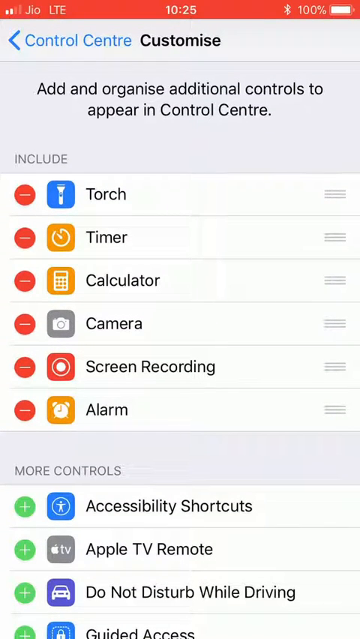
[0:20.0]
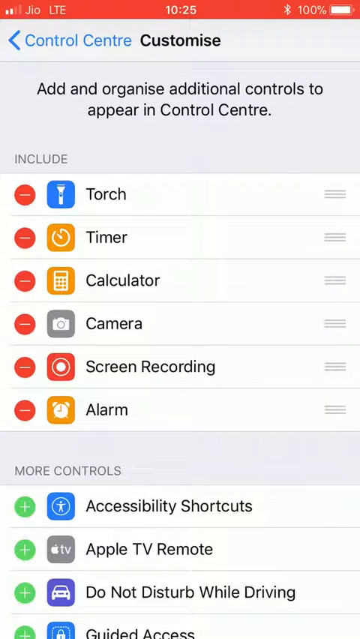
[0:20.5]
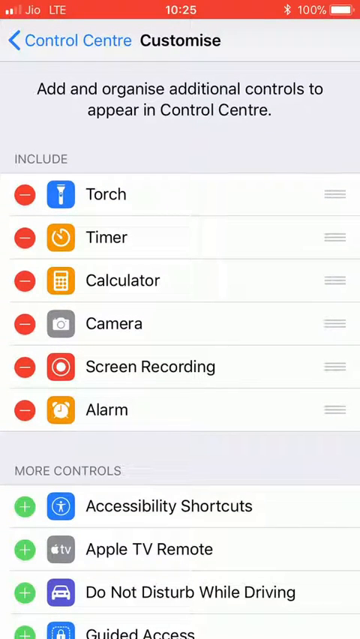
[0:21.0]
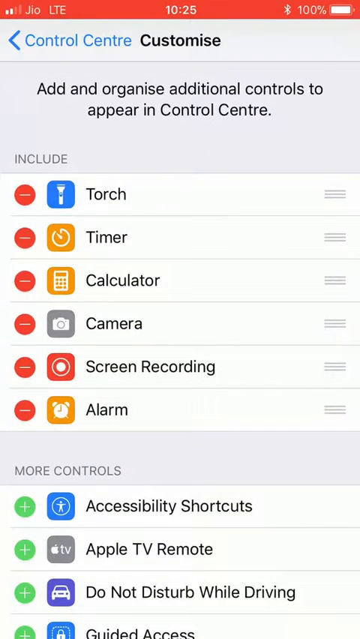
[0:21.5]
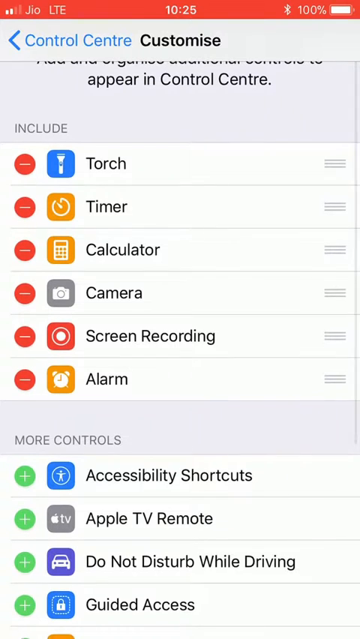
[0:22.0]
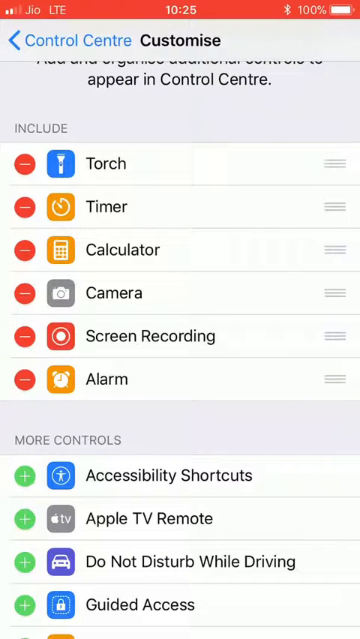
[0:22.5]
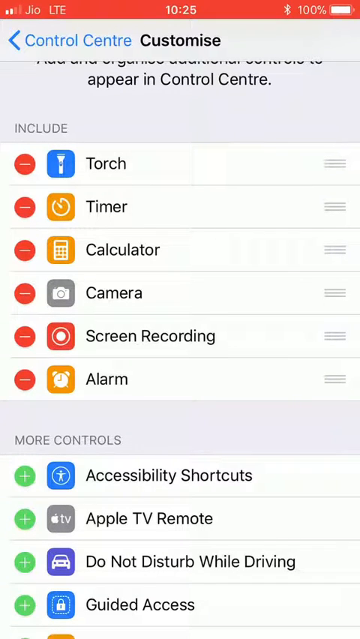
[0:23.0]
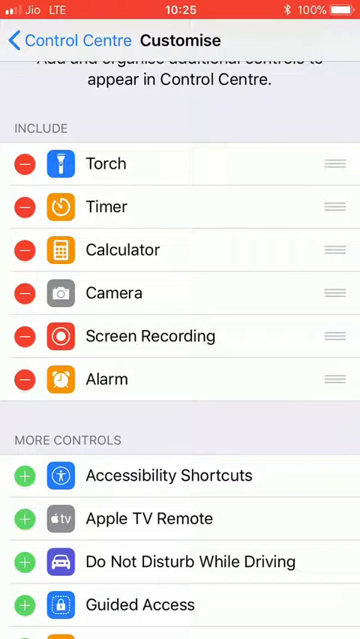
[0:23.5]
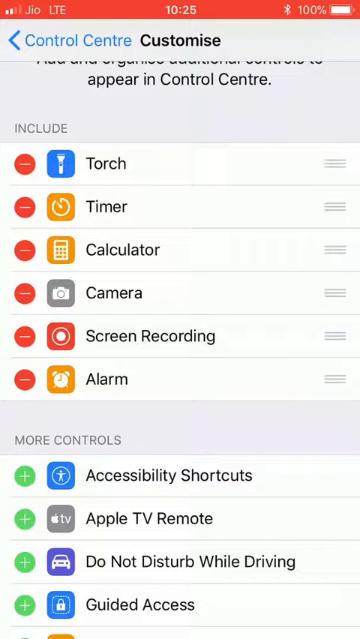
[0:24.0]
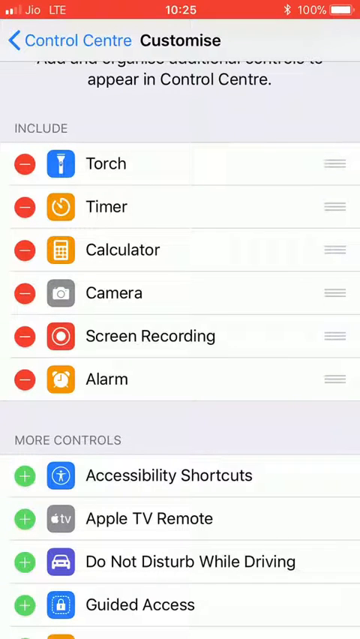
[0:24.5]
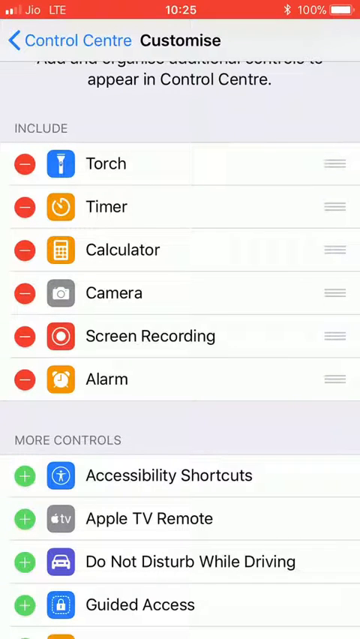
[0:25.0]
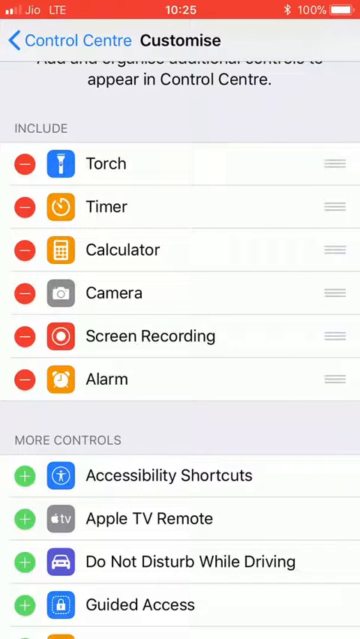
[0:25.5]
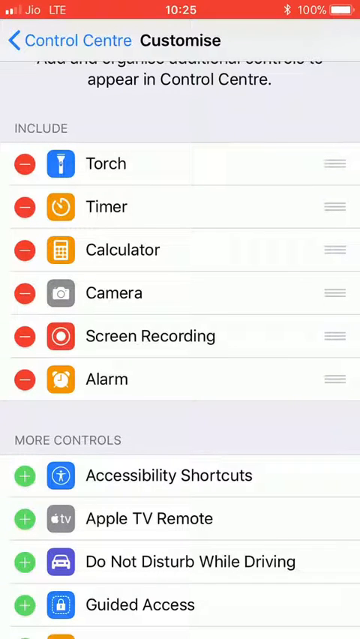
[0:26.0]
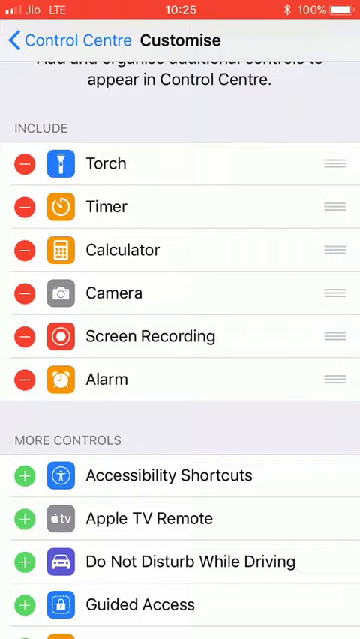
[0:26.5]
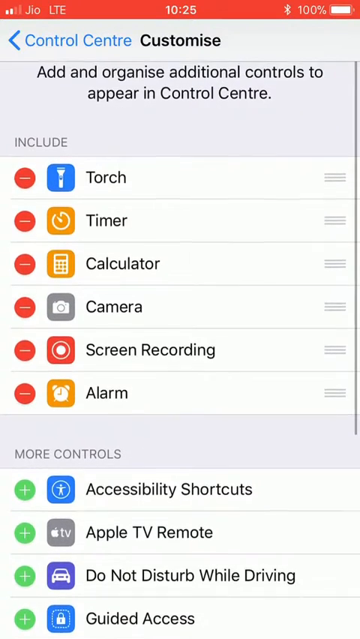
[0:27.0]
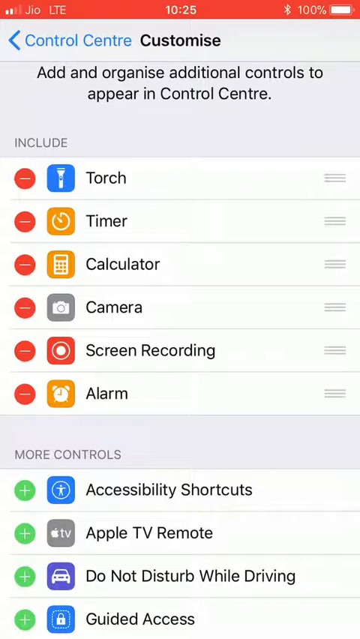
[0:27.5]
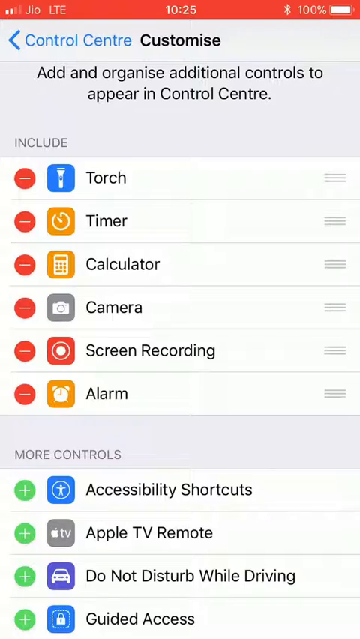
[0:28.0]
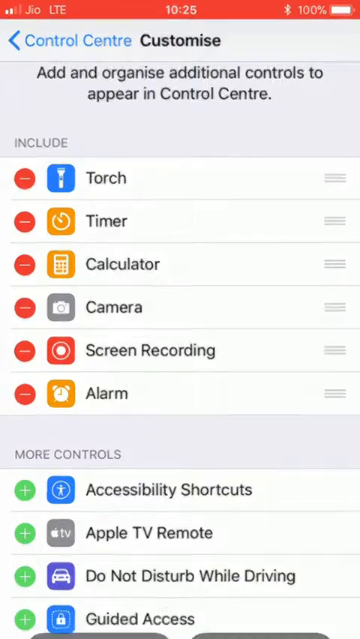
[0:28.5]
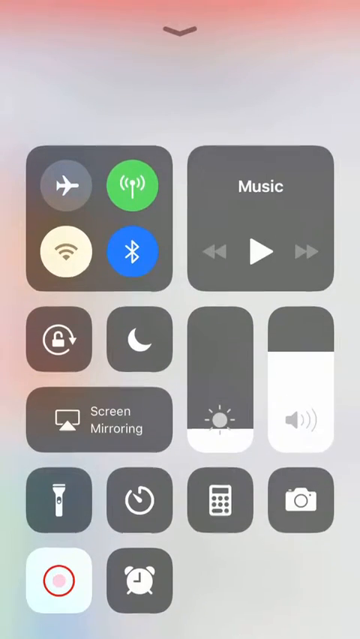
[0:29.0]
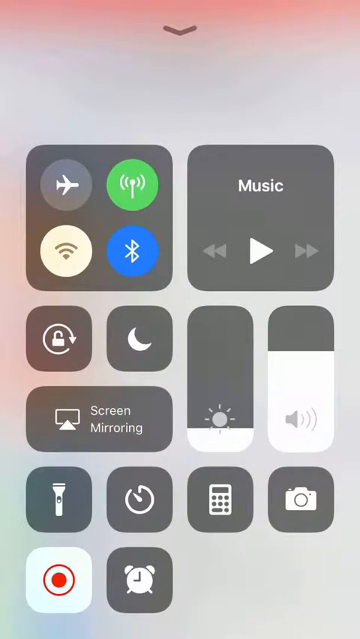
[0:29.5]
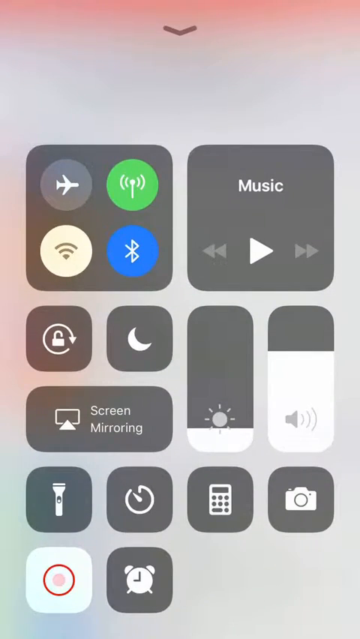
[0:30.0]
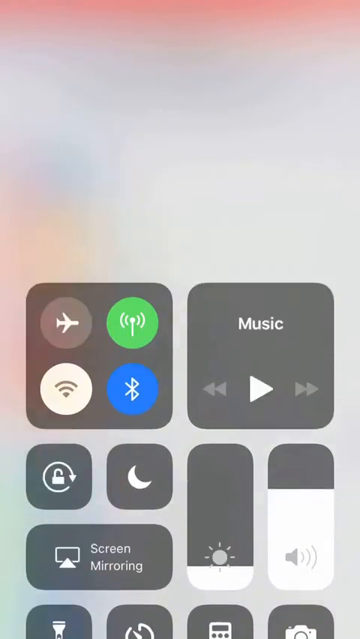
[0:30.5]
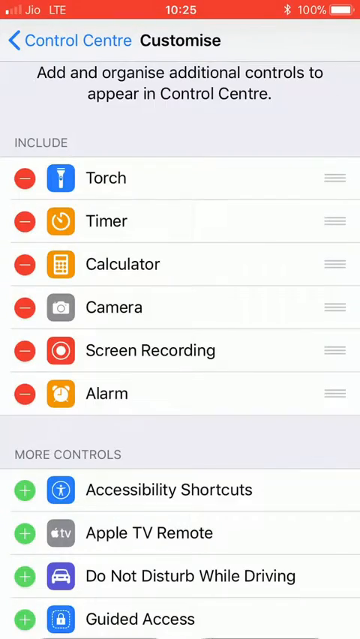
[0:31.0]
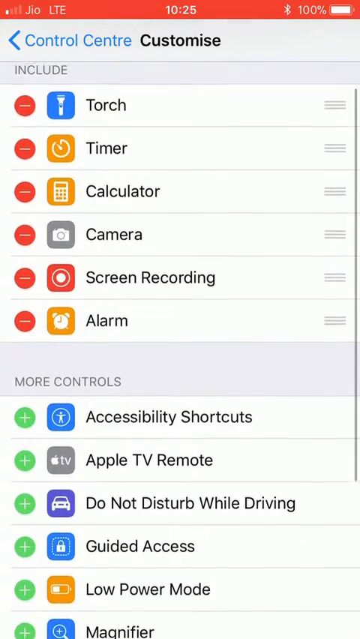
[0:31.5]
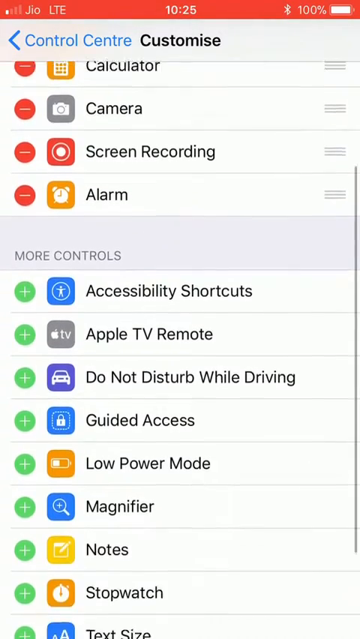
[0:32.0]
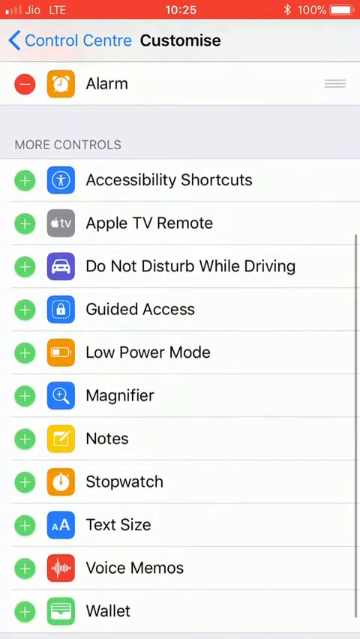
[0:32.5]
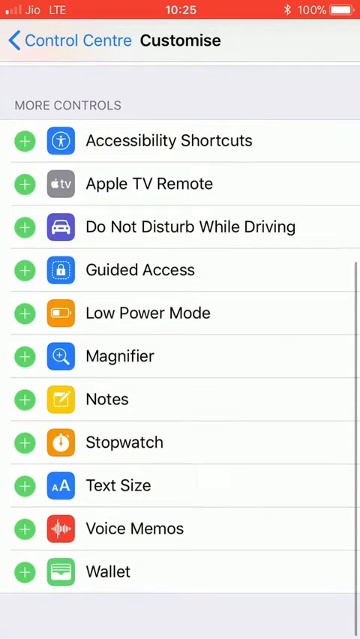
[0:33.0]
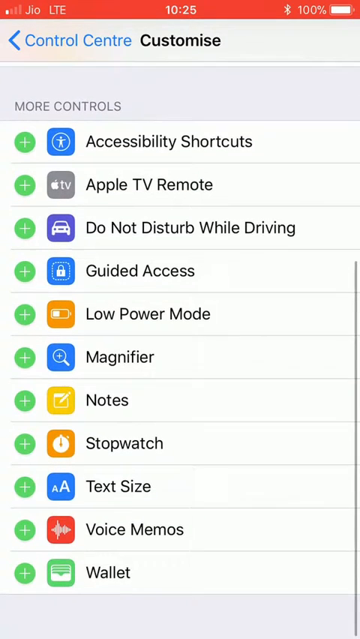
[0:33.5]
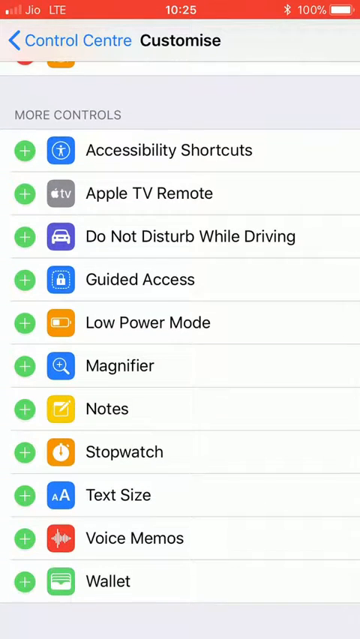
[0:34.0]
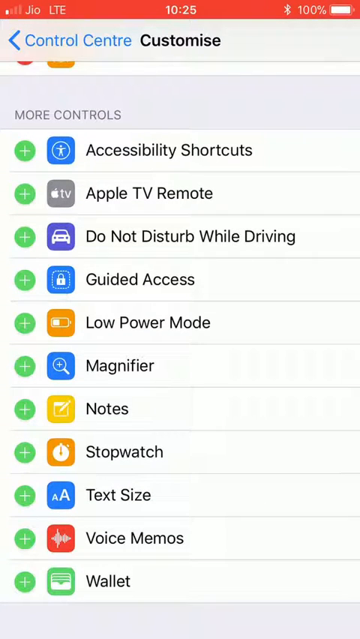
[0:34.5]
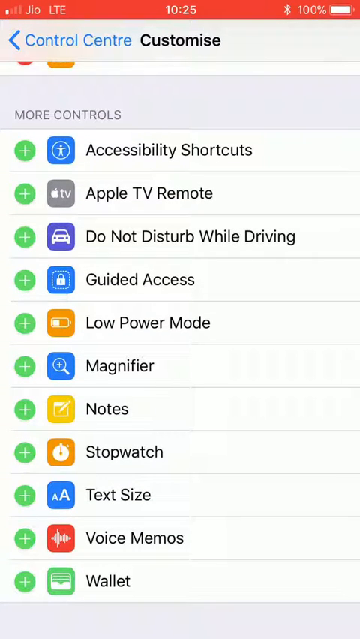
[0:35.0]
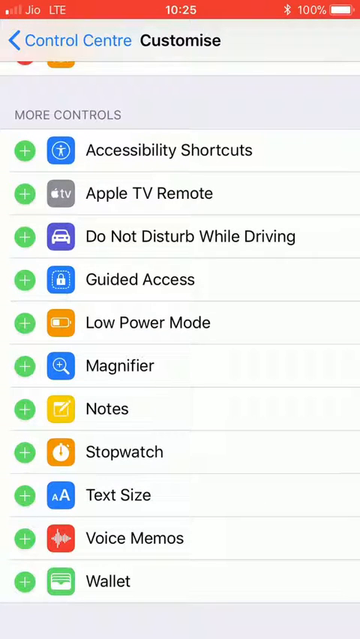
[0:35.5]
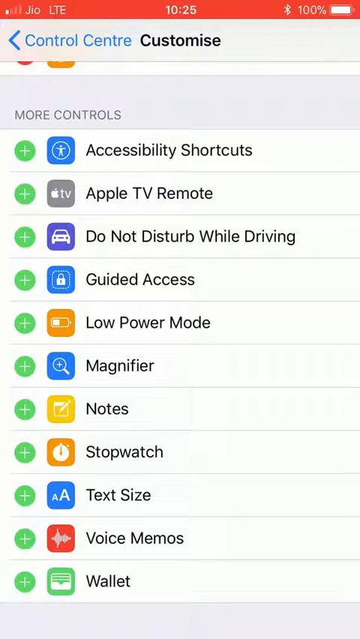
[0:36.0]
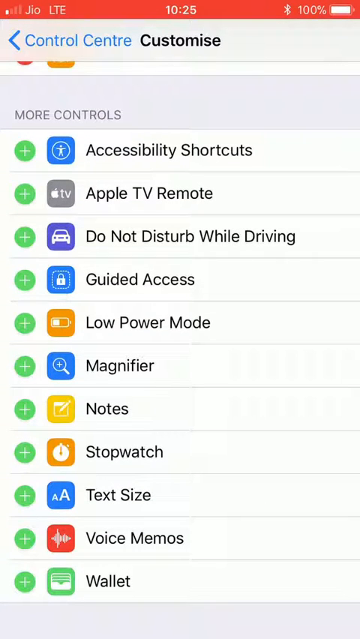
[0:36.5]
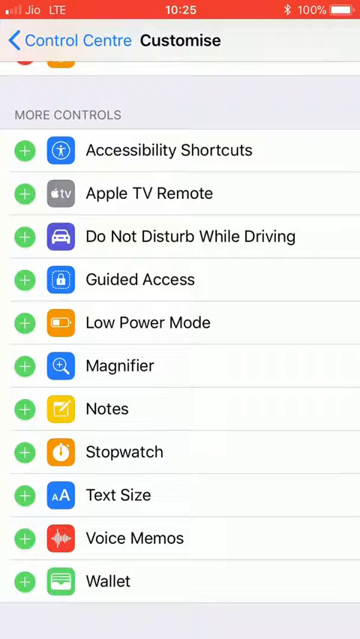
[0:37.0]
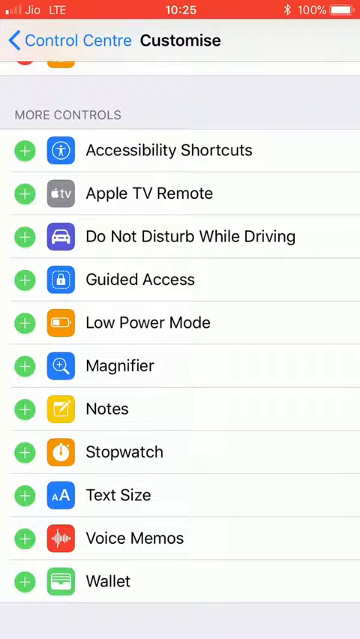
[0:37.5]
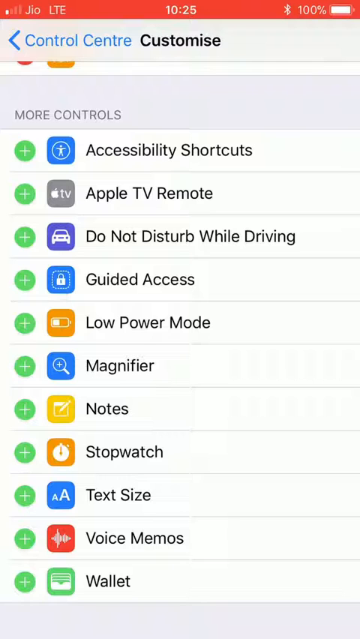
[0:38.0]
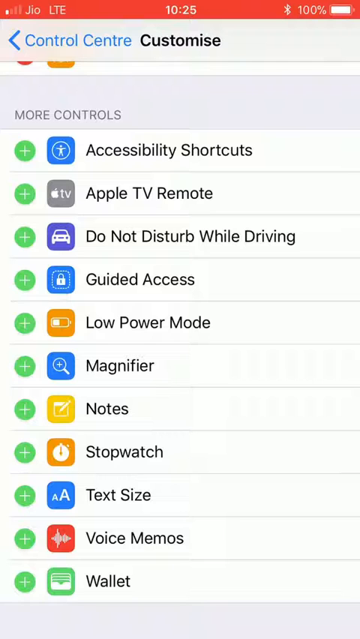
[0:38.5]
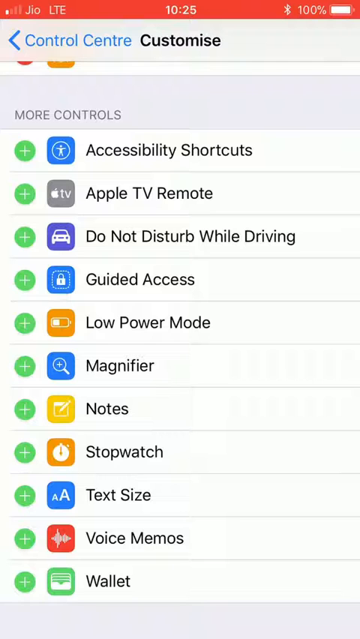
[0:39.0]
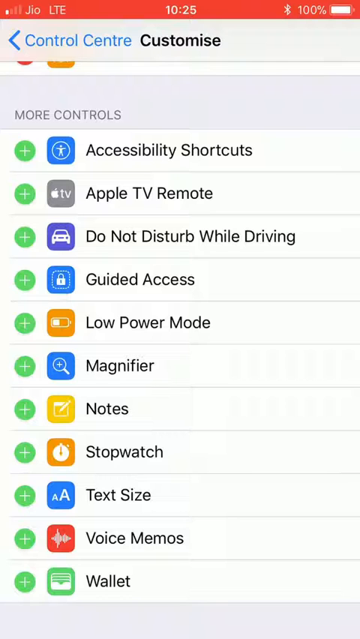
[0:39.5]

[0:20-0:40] The screen lists "Torch, Timer, Calculator, Camera, Screen Recording, Alarm, Accessibility Shortcuts, Apple TV Remote, Do Not Disturb While Driving." It scrolls down to Guided Access, and he clicks on a link at the bottom of the phone that has a red circle, almost like a target circle. The list scrolls down past guided access to low power mode, magnifier, notes, stopwatch, text size, voice memos and wallet, then scrolls back up to the top, showing torch, timer, calculator, camera, screen recording, alarm, accessibility shortcuts, Apple TV remote, do not disturb while driving and guided access. On the left-hand side is a row of circles with what looks like a dash. The torch emblem is blue, the timer orange, the calculator orange, the camera gray, the screen recorder red and the alarm orange.